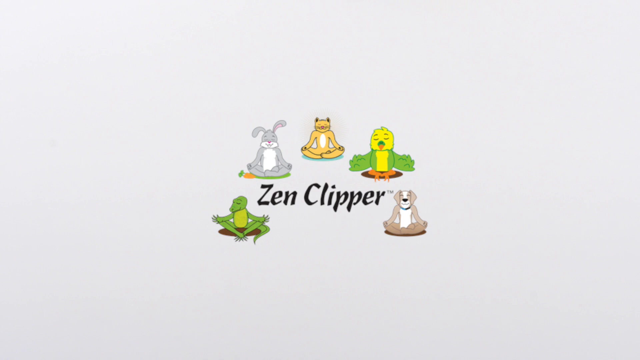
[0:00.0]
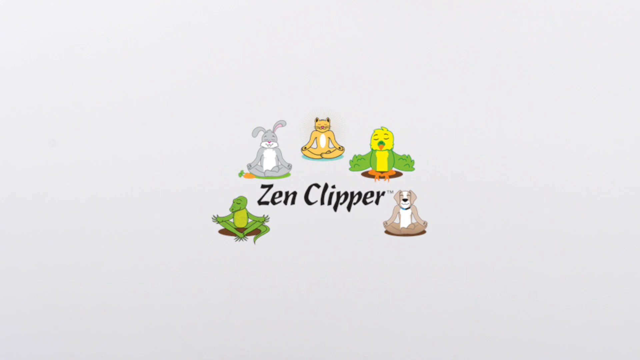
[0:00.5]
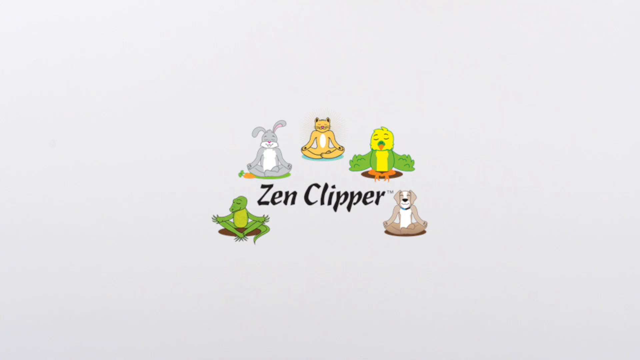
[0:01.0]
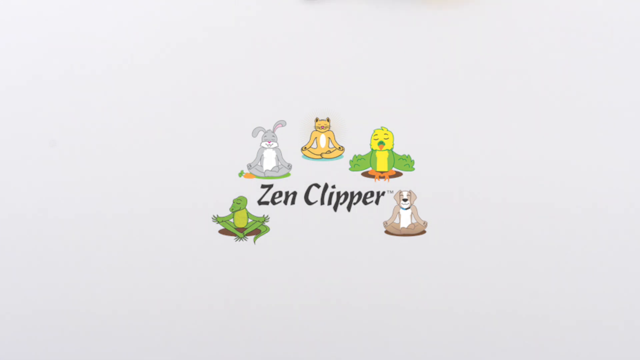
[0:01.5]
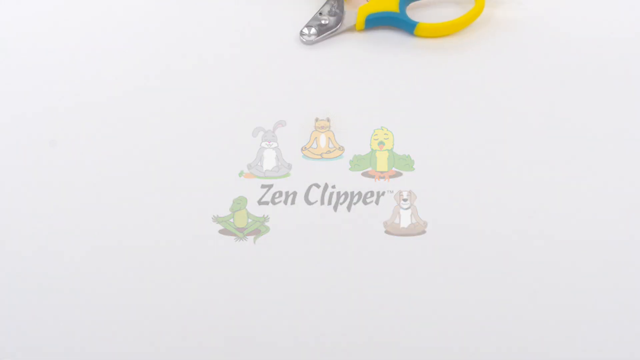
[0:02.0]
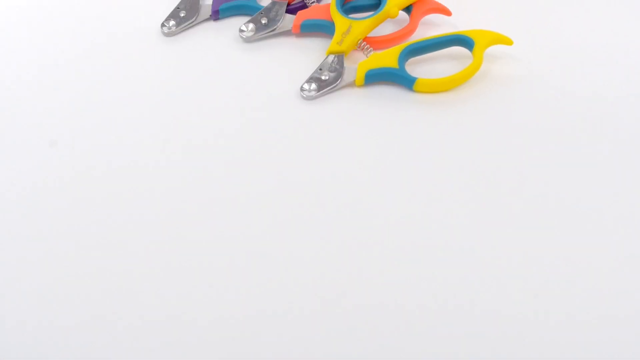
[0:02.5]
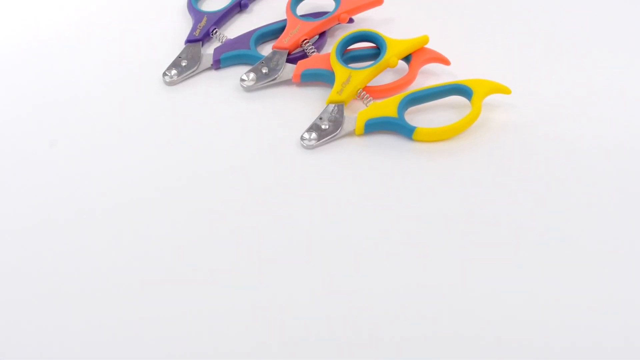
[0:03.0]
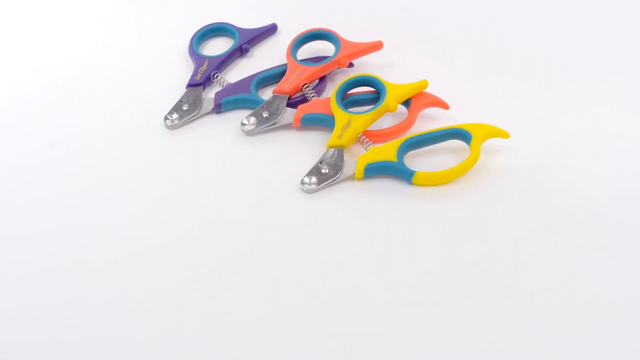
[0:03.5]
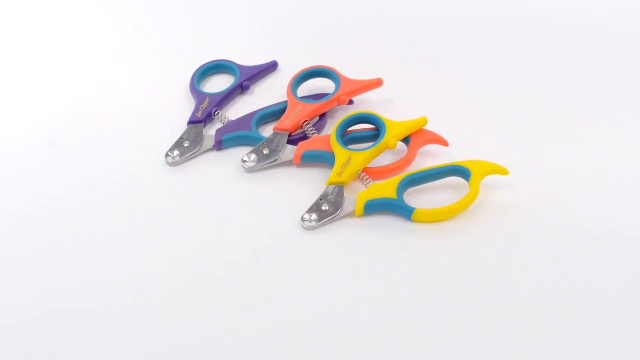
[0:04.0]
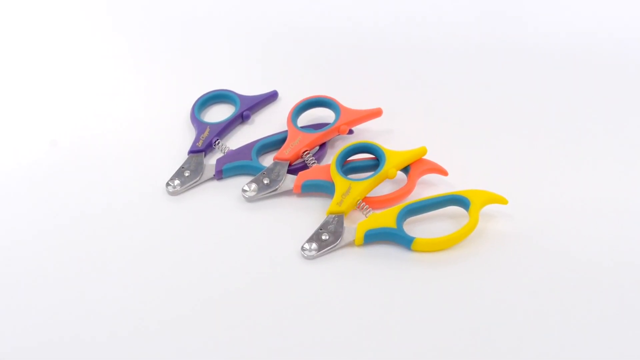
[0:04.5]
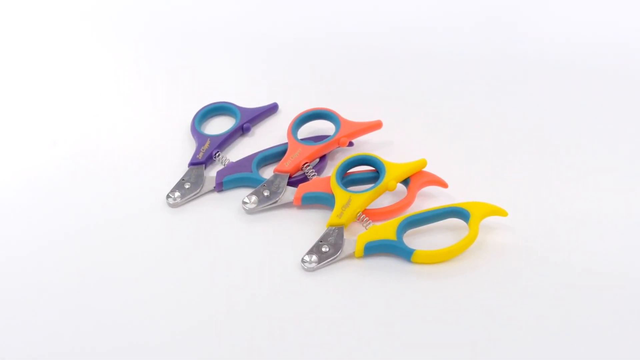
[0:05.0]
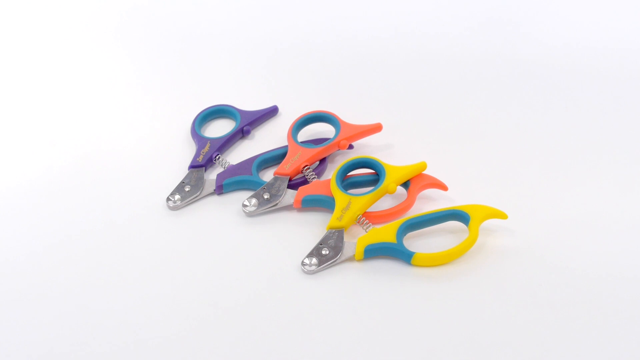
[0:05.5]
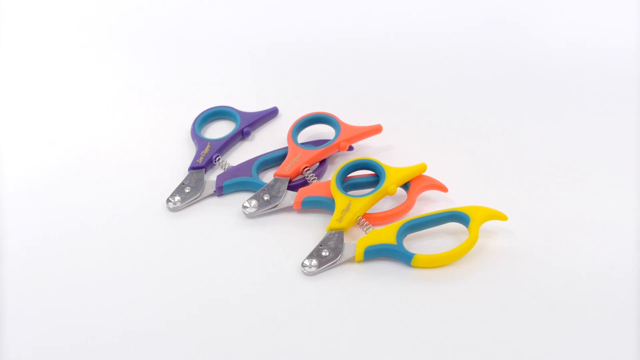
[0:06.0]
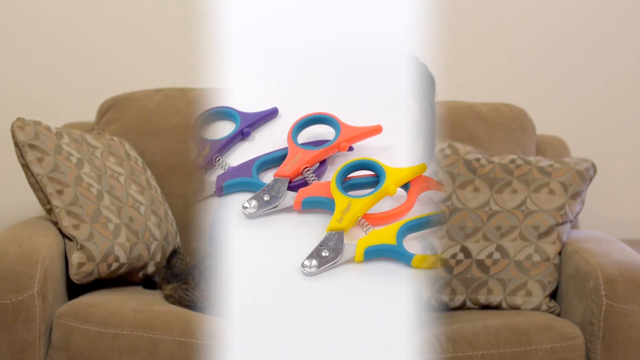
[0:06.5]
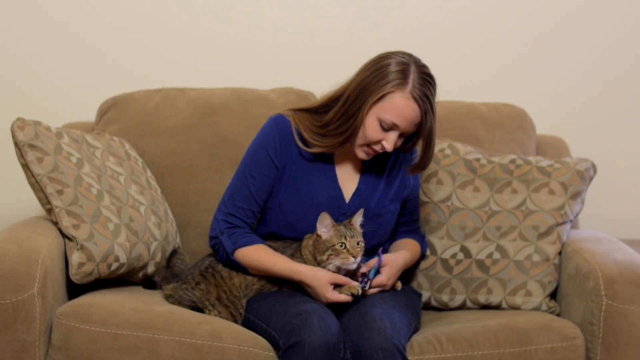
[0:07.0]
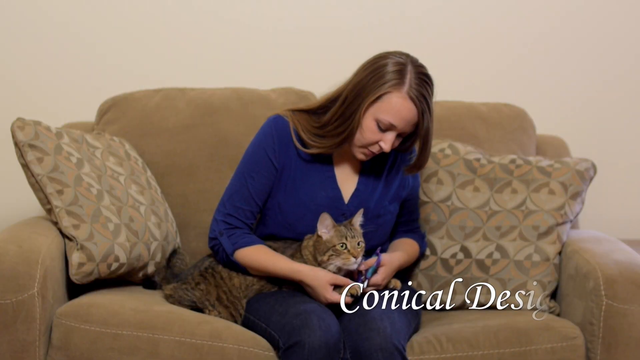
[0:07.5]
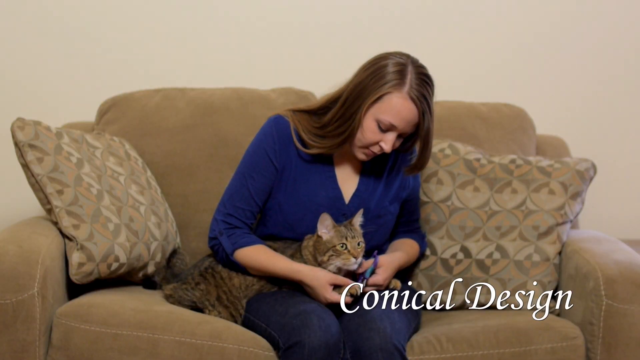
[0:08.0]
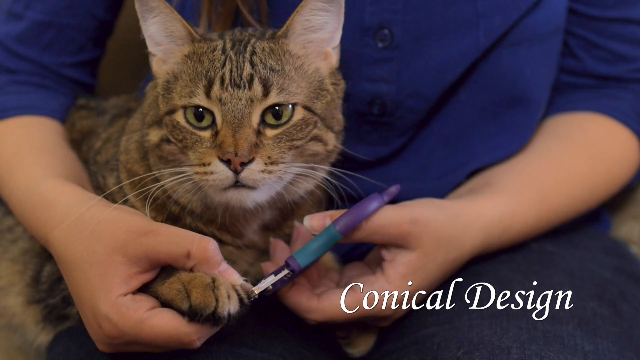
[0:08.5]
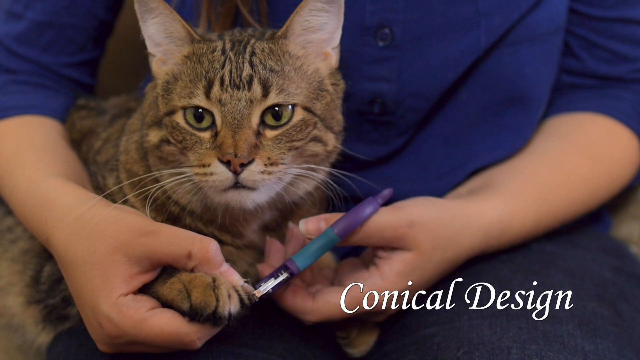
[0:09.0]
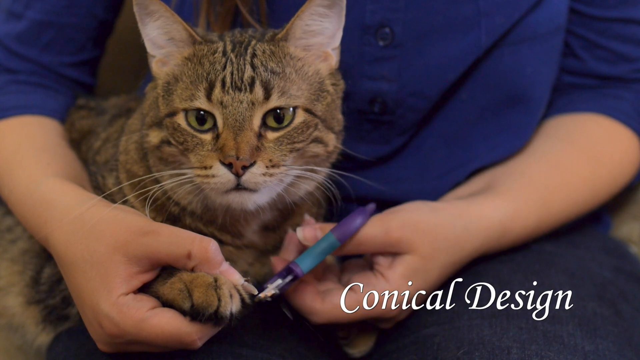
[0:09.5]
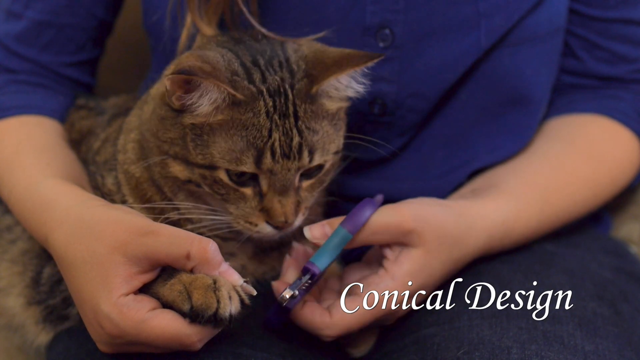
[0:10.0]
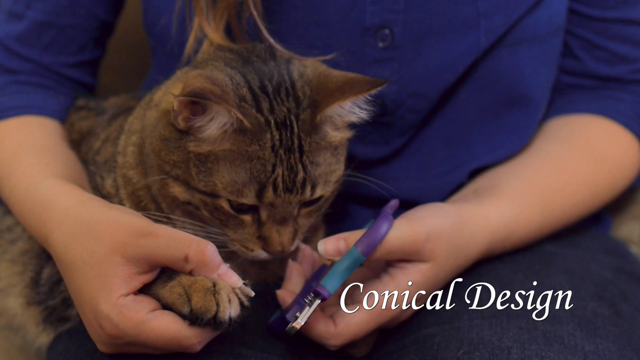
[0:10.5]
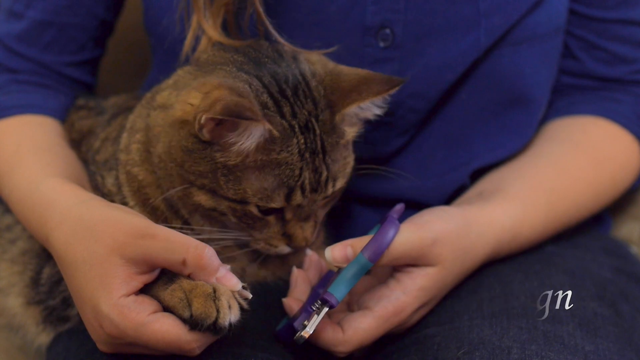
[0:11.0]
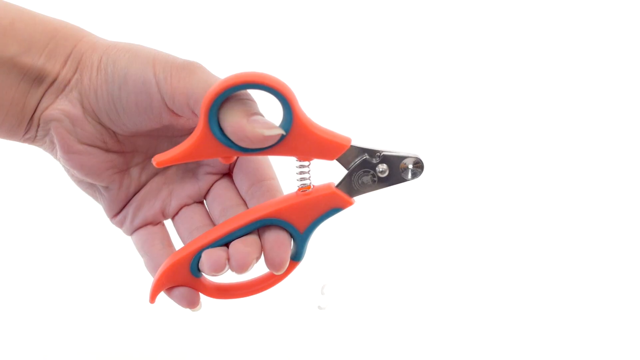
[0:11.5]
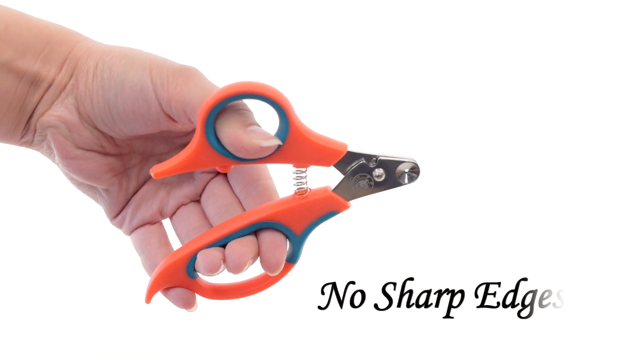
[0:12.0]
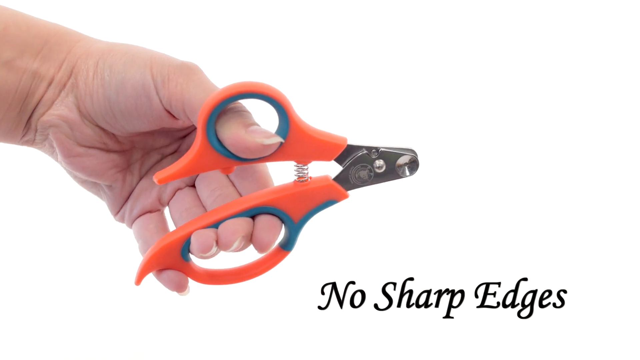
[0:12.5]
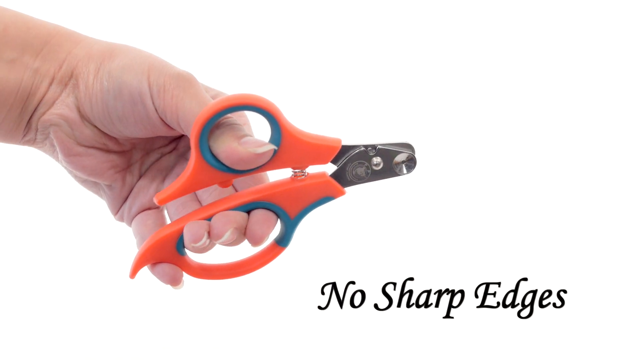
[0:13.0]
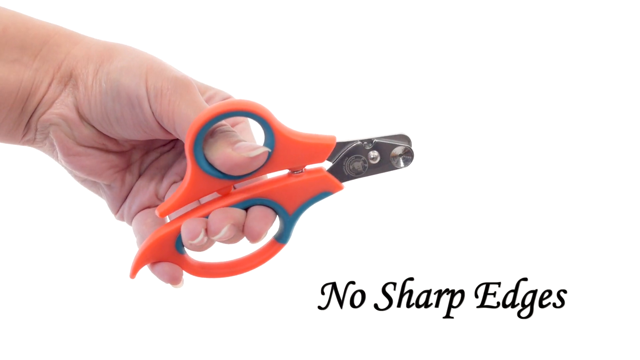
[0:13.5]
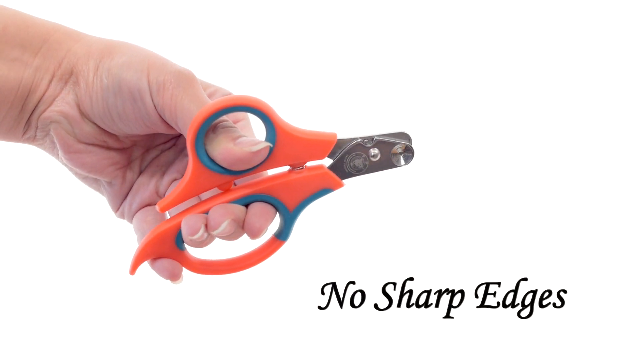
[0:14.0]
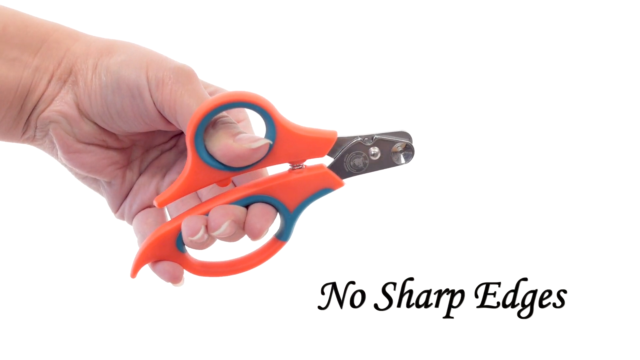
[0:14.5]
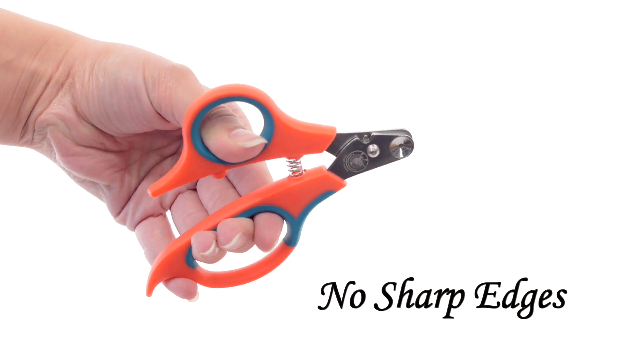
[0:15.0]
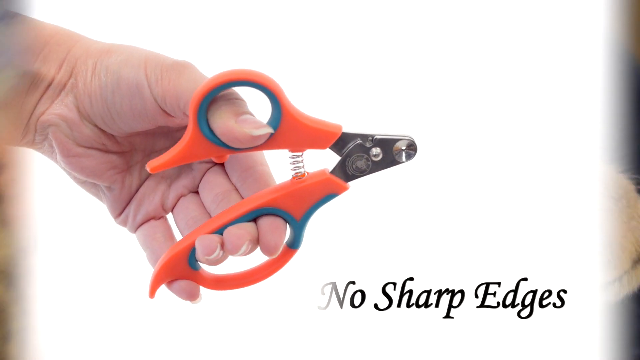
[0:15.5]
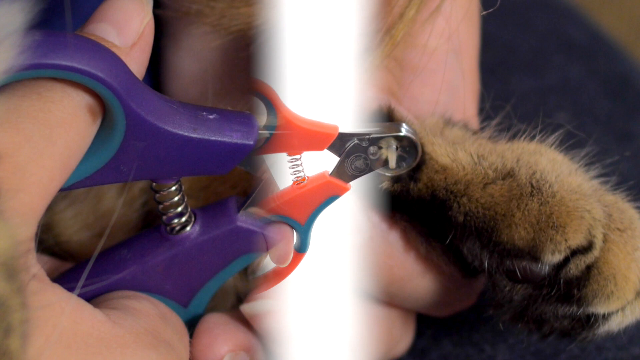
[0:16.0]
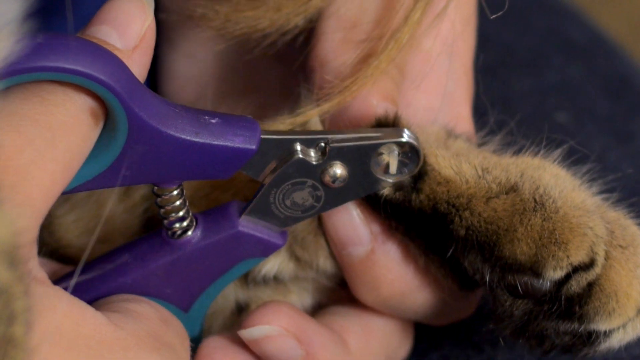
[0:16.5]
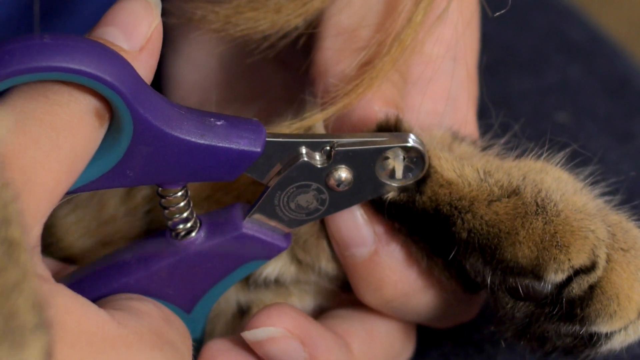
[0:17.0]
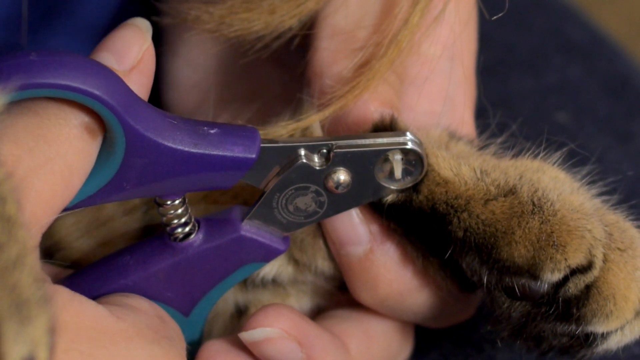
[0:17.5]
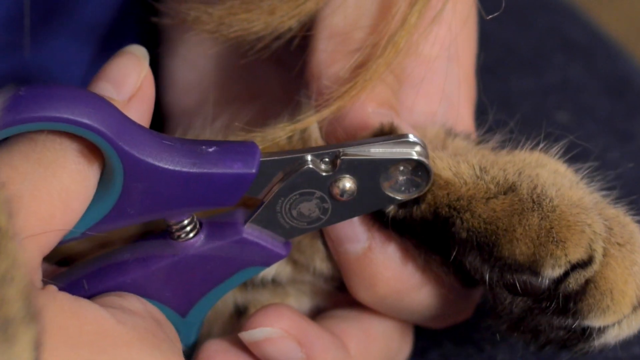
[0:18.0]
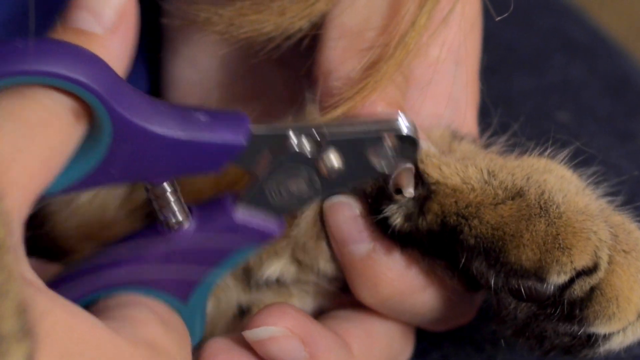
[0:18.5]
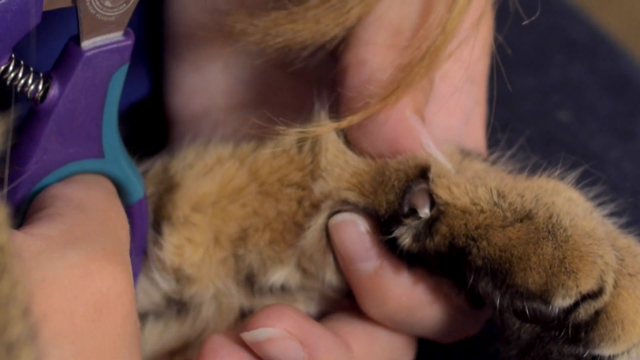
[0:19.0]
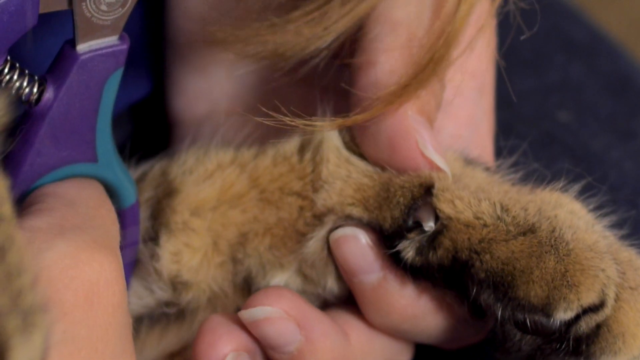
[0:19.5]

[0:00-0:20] Three clippers of different colors are shown: yellow and blue, orange and blue, and blue. Each has one short handle and one long handle. A woman with black hair is seated on a brown sofa with two pillows on it, wearing a blue shirt and pants. She bends forward while holding a cat, holding the clipper in her right hand, and is visibly cutting the cat's nails. The cat raises its head up and down while looking at the camera, and the woman seems to be communicating with it. A hand then shows an orange and blue clipper, showing that the clipper has no sharp edges. Another scene shows a hand cutting a cat's nails; the hand belongs to a woman with blonde hair.